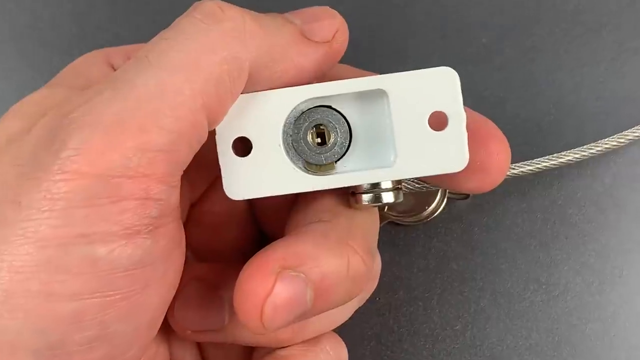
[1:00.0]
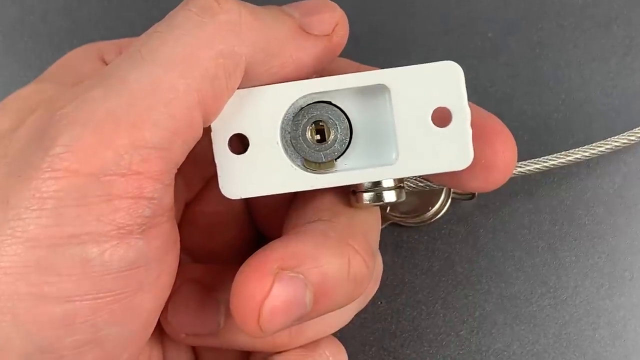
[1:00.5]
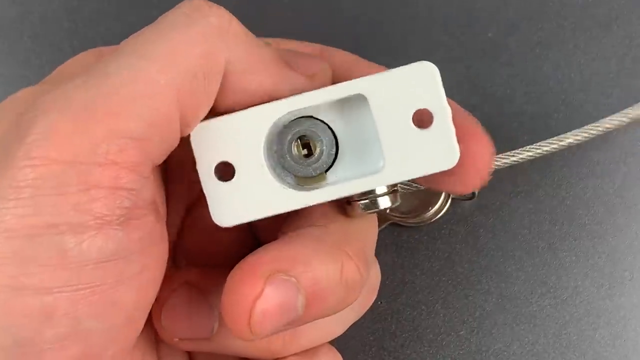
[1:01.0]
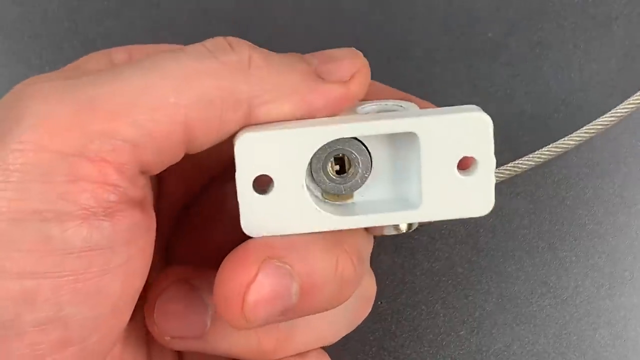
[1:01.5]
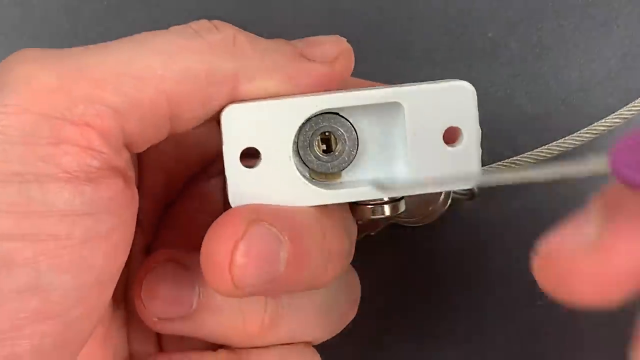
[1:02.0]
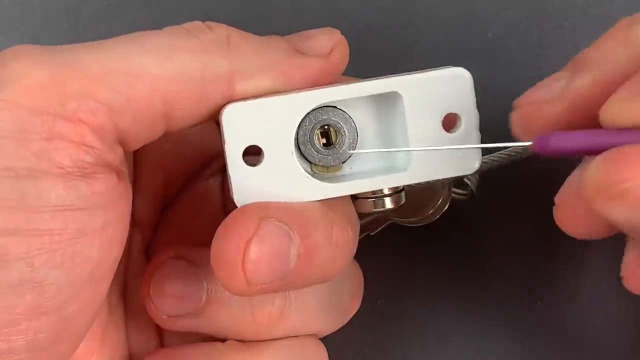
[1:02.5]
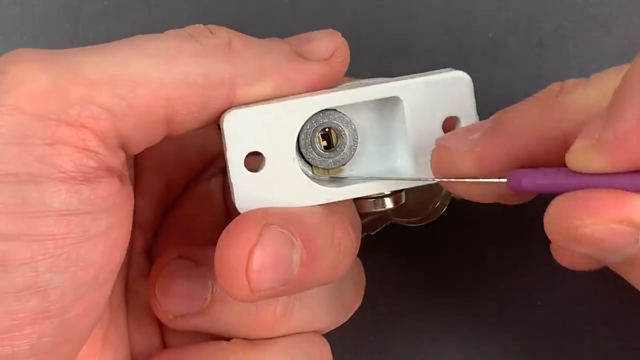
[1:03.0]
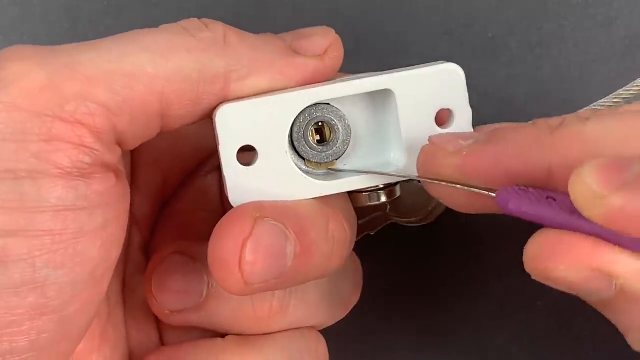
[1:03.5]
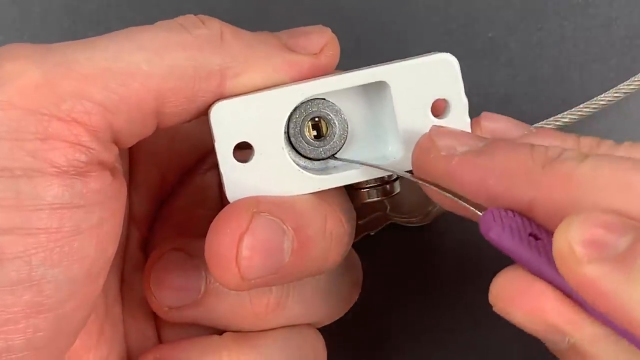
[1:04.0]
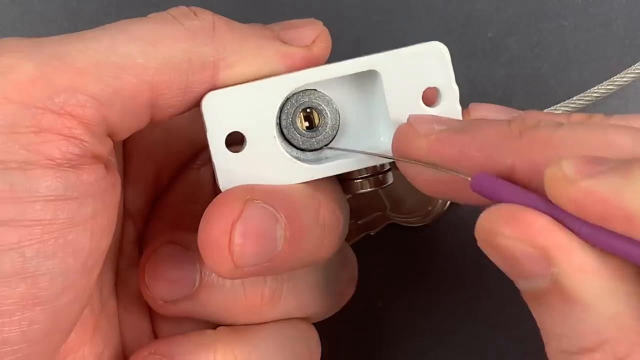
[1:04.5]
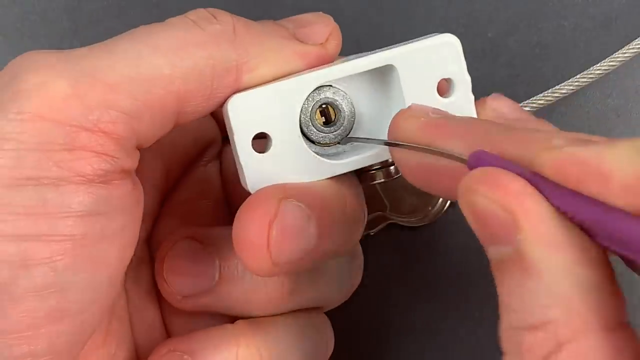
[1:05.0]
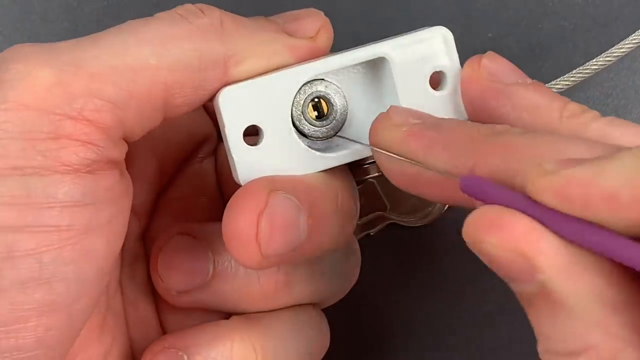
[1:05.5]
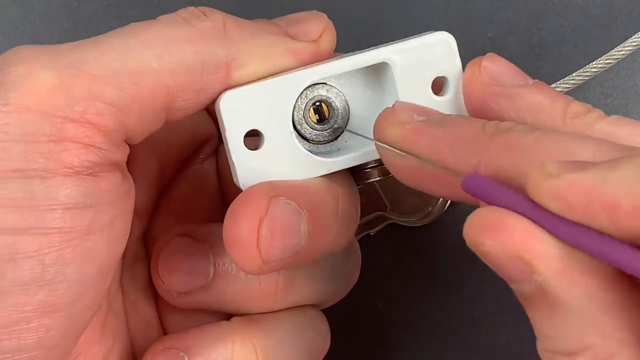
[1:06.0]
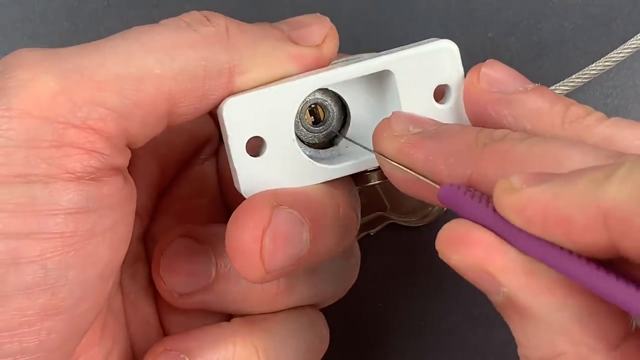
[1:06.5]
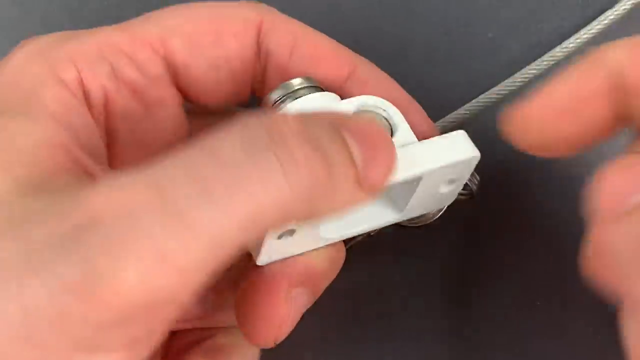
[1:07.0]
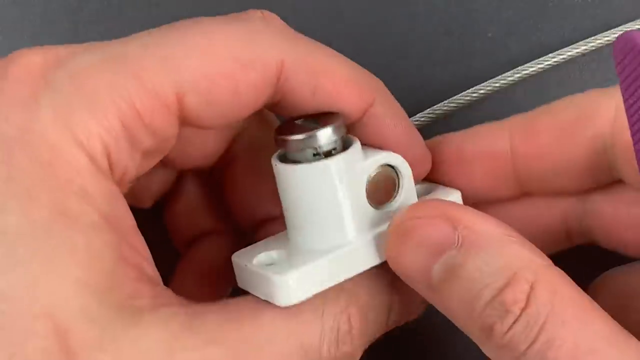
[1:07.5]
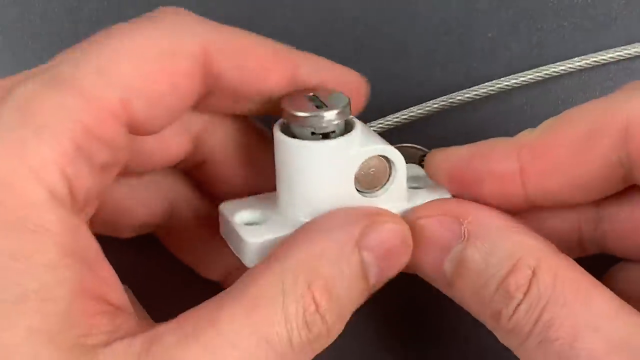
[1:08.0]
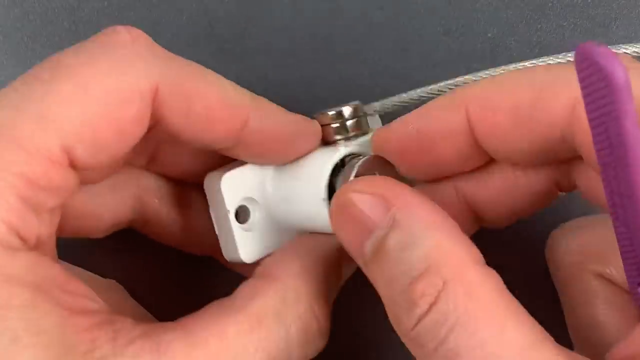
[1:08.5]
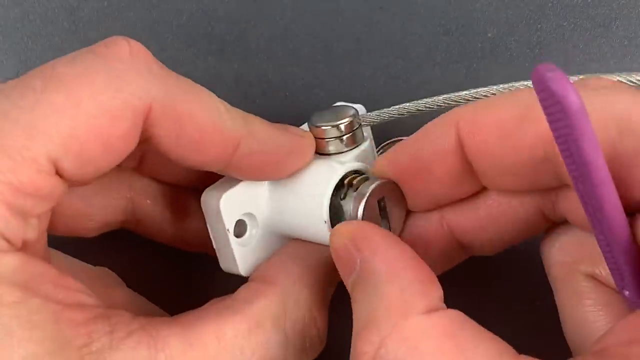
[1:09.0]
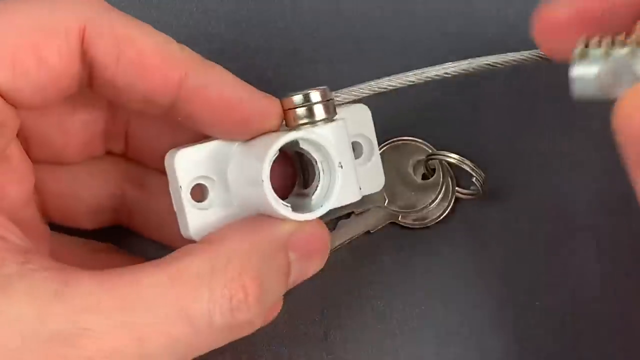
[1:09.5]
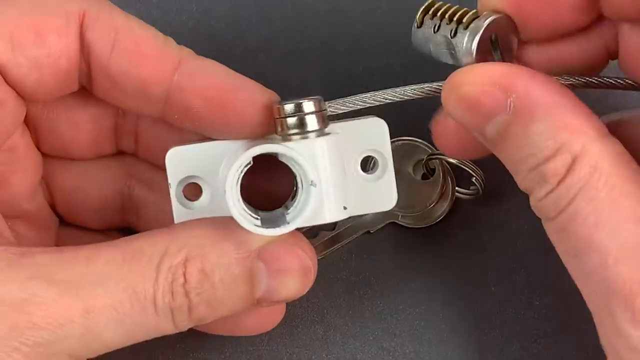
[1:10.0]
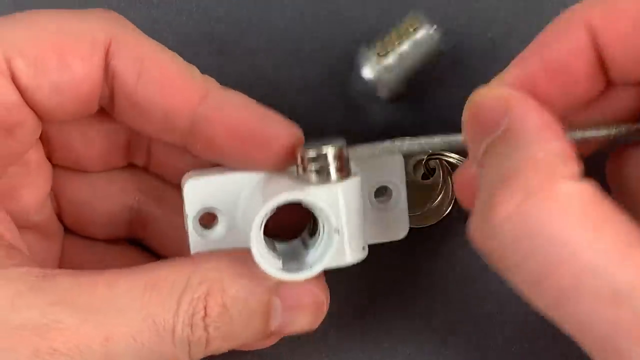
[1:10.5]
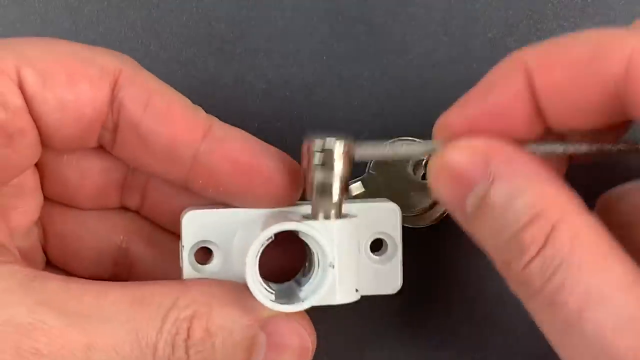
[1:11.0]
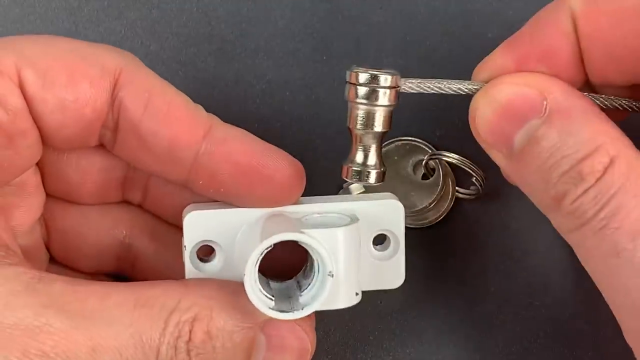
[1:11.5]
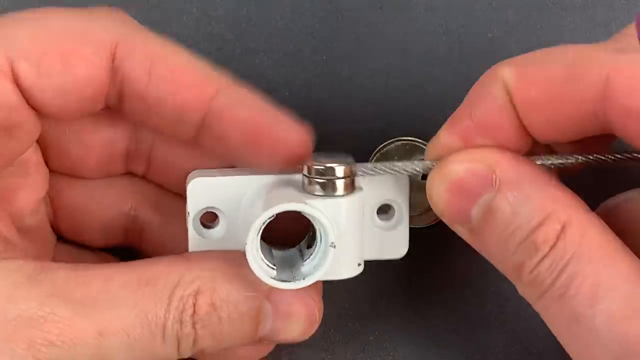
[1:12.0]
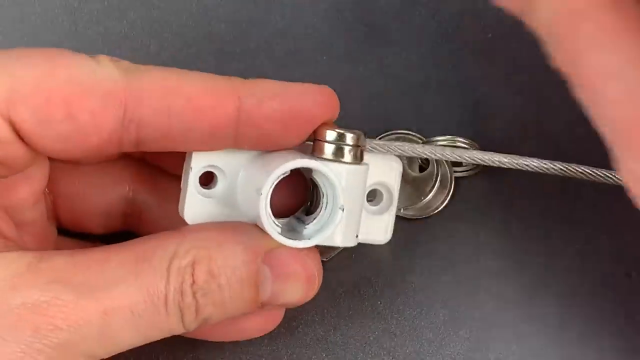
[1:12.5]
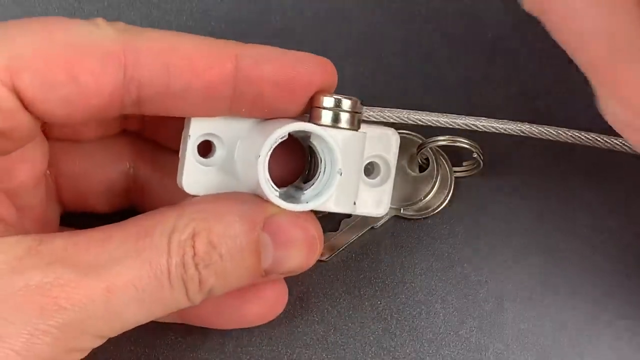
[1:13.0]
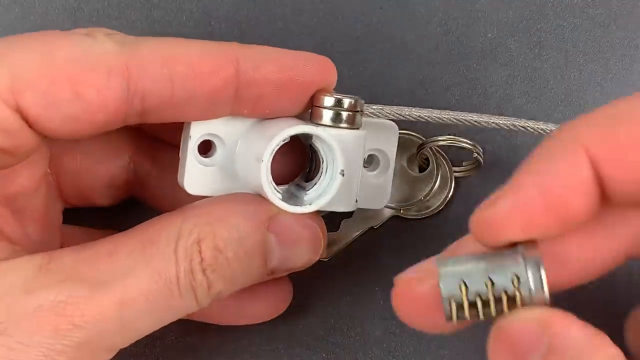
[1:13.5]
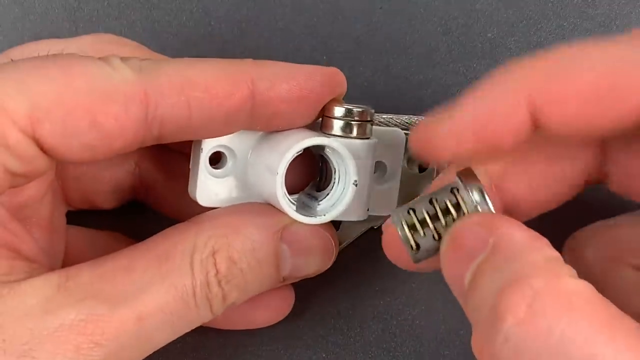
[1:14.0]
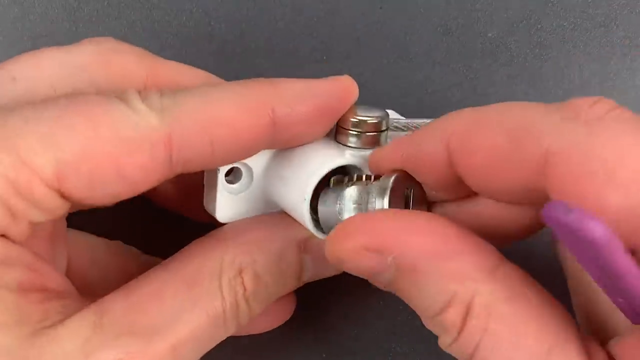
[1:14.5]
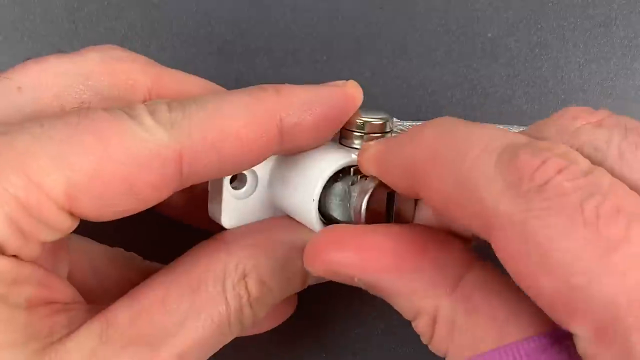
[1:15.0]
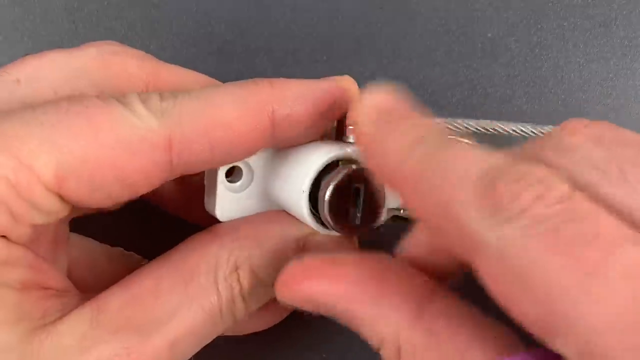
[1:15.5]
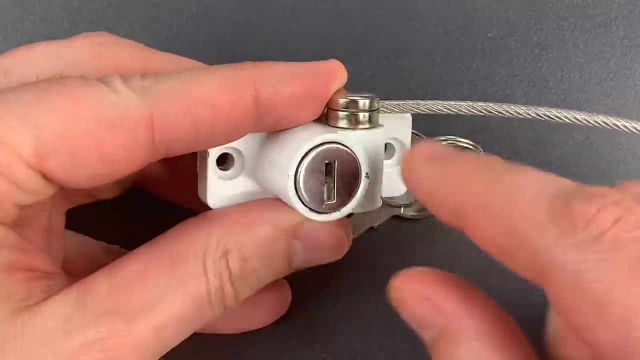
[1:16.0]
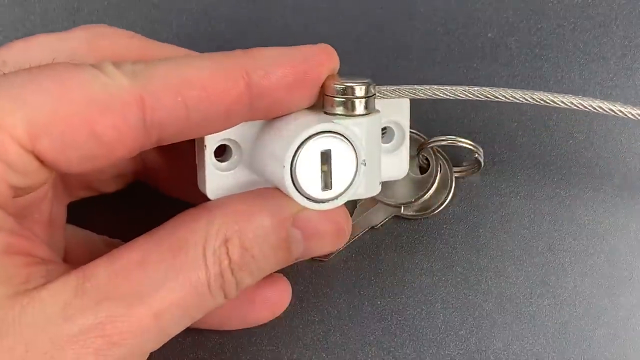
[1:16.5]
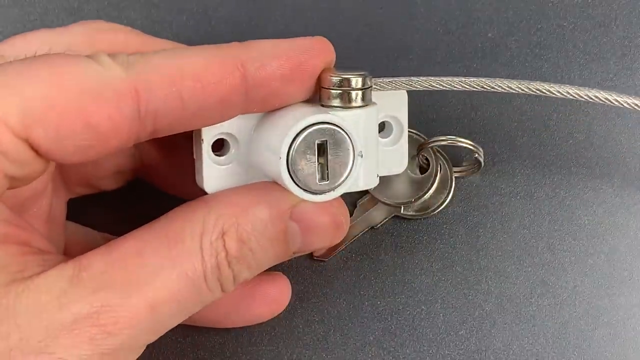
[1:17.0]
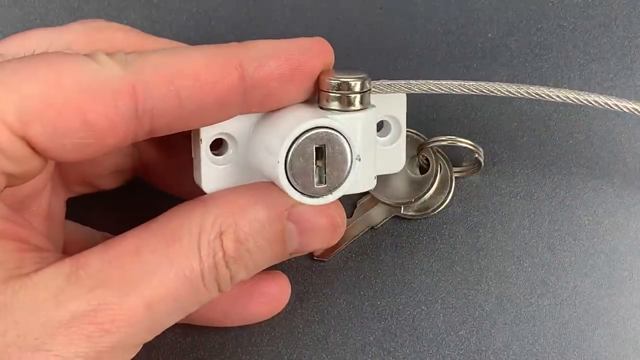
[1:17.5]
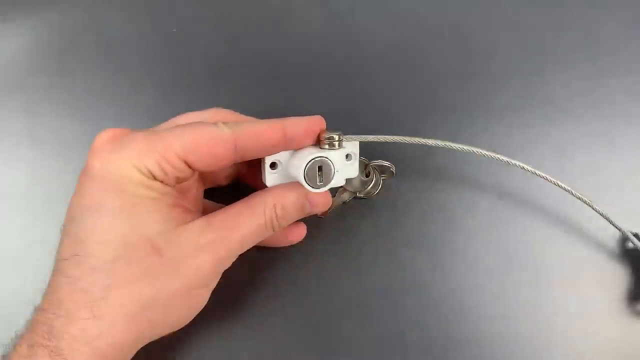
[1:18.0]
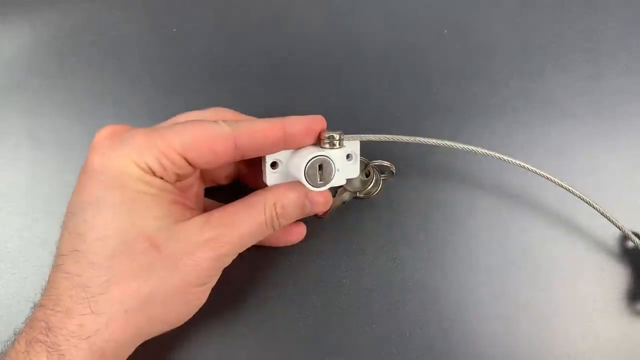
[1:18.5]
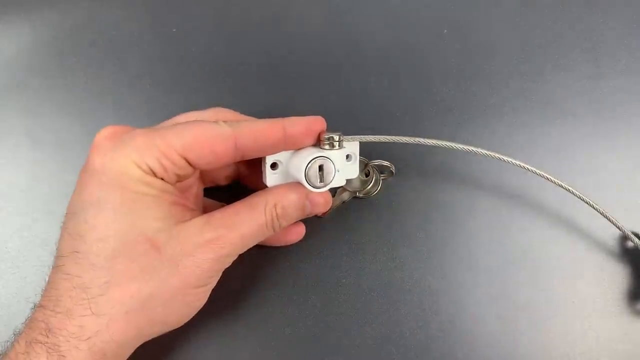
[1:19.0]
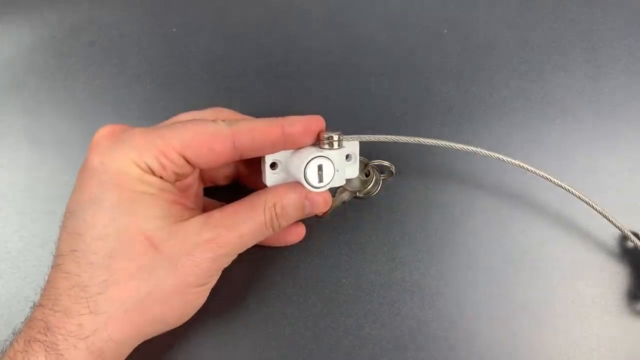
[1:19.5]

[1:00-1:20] A man's hands stick a little pick item into a door lock receptacle. He pushes the door lock out and then puts it back in, then shows the back of the receptacle. The receptacle is a white rectangular object with one hole on each side for mounting it on a door. The lock itself is a round metal cylinder with a slit for the key. Two silver keys with no color and no apparent writing are attached to a silver metal key chain. A metal type of cord is attached to the door lock; it seems to be perhaps for stabilizing the lock.